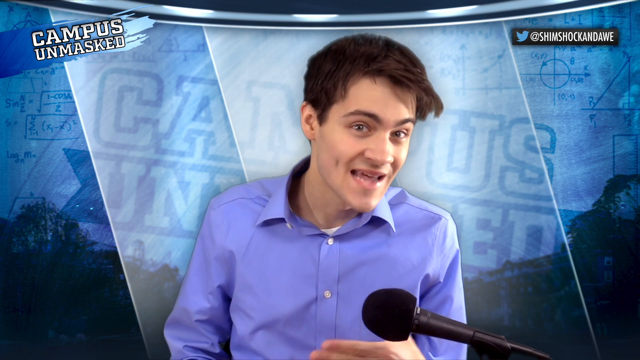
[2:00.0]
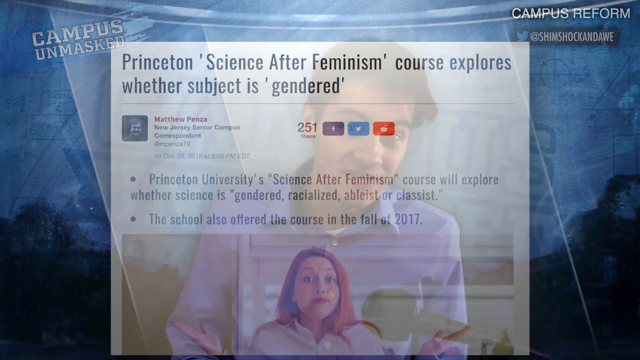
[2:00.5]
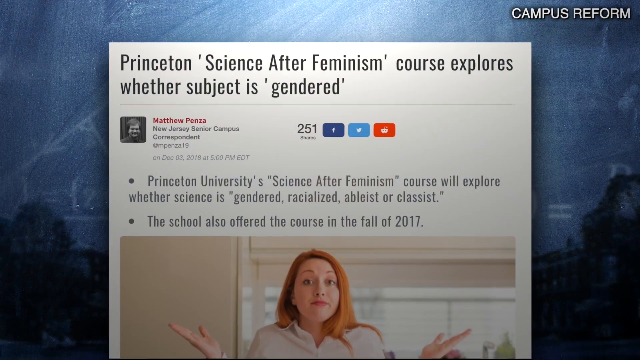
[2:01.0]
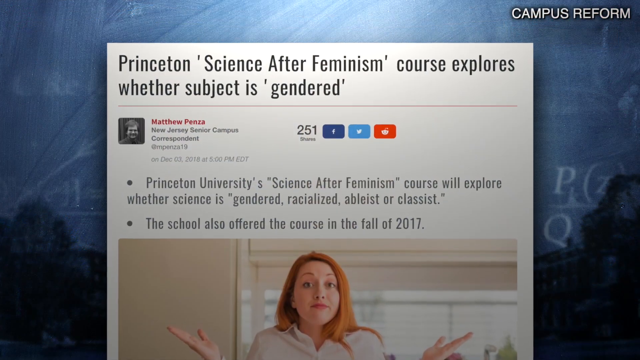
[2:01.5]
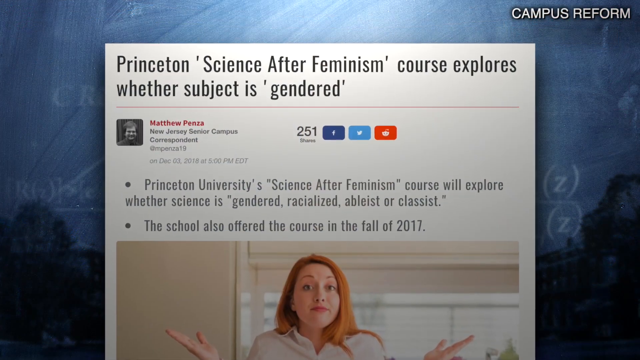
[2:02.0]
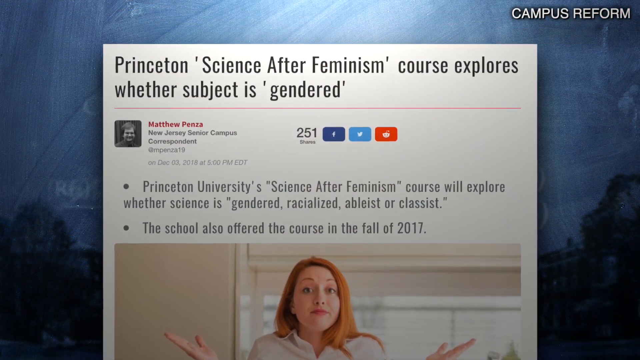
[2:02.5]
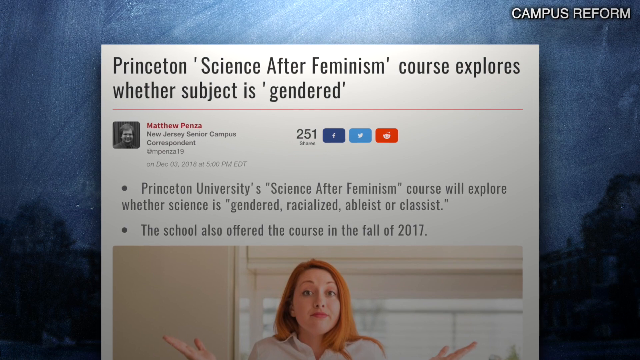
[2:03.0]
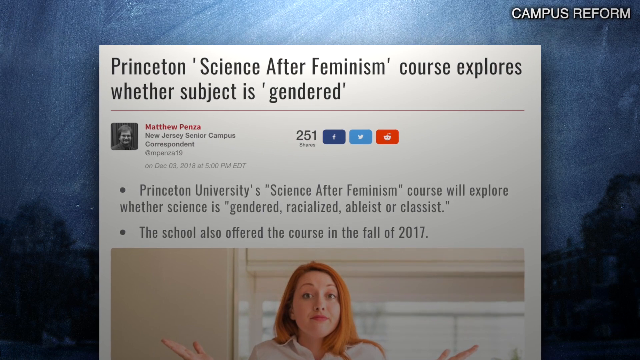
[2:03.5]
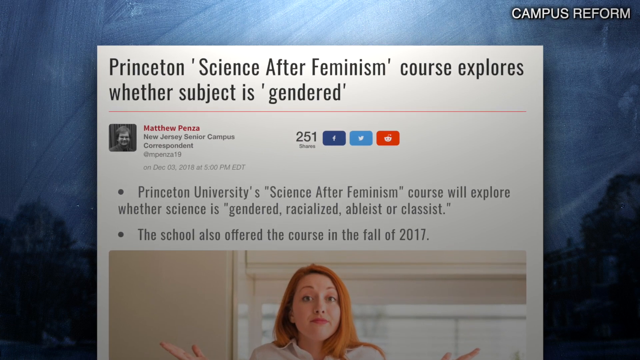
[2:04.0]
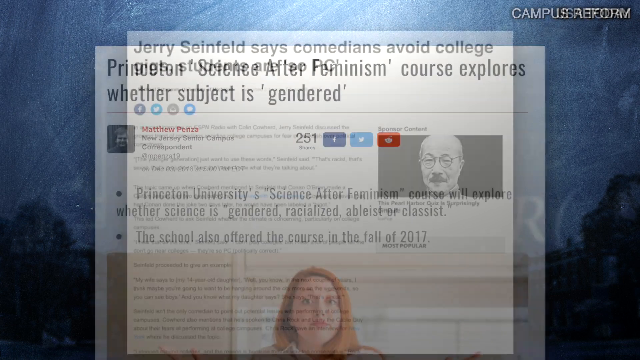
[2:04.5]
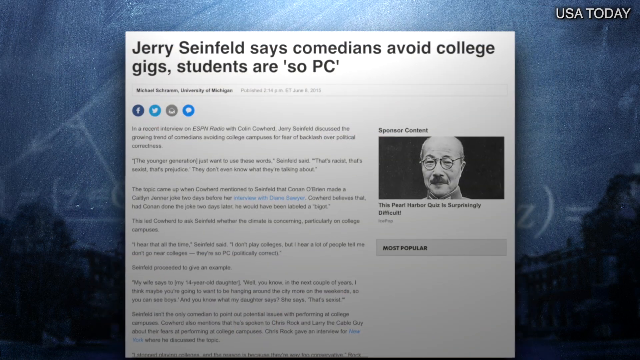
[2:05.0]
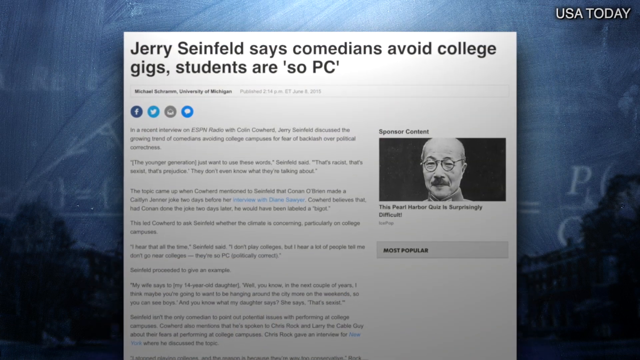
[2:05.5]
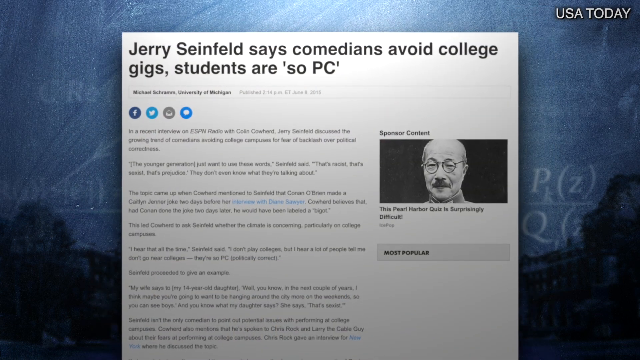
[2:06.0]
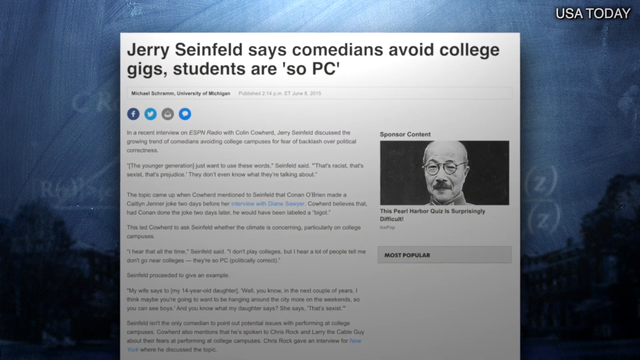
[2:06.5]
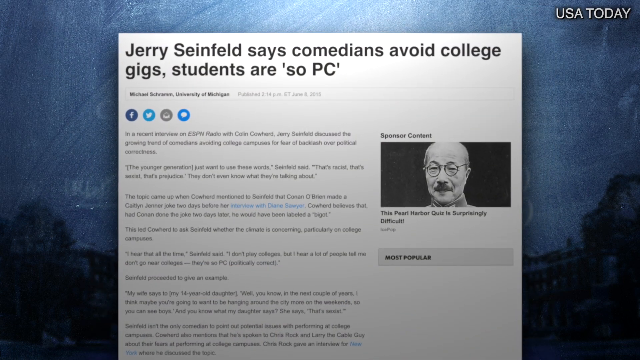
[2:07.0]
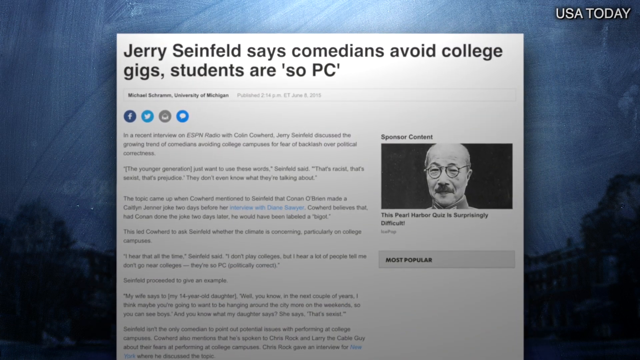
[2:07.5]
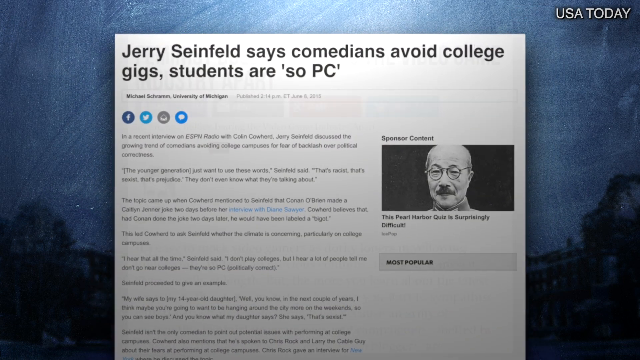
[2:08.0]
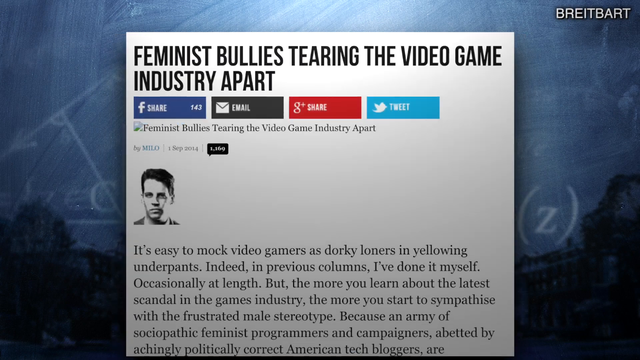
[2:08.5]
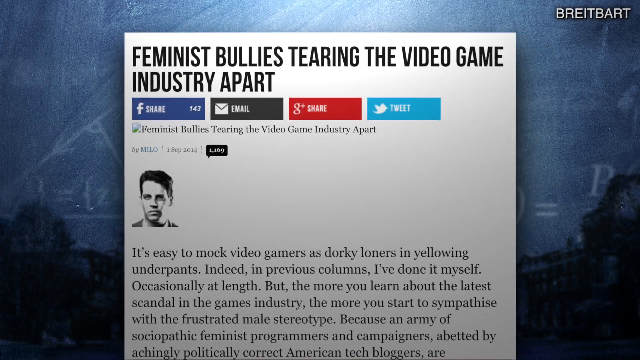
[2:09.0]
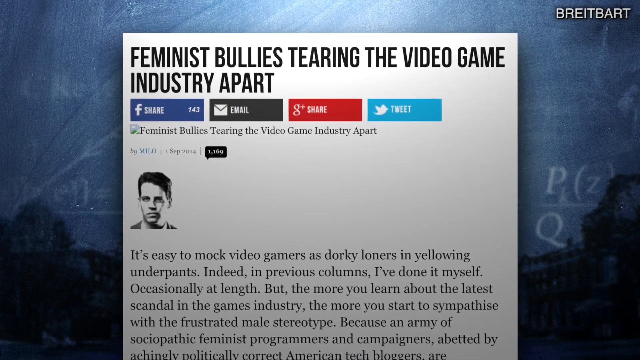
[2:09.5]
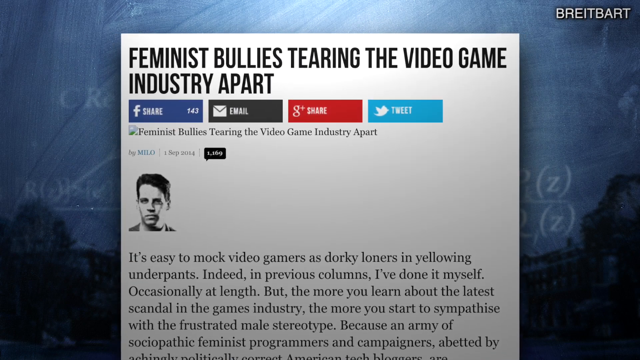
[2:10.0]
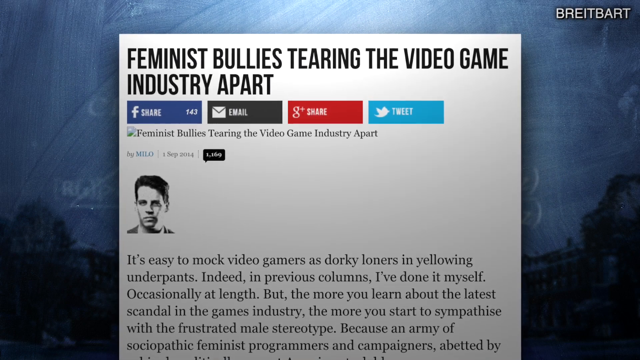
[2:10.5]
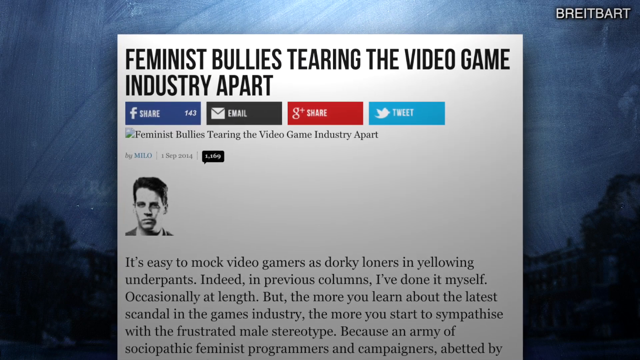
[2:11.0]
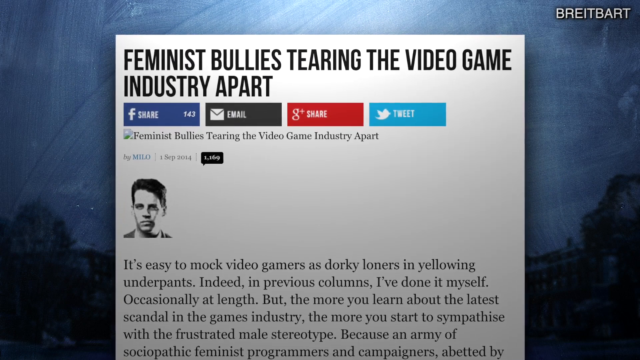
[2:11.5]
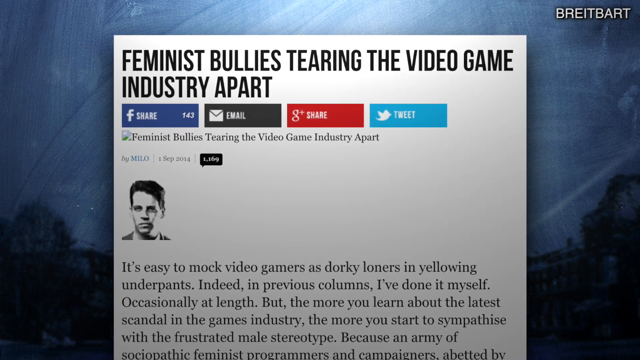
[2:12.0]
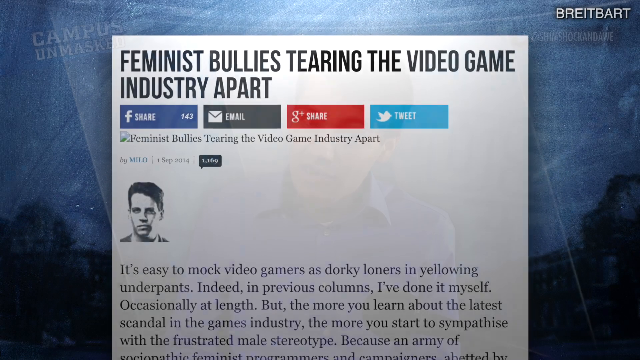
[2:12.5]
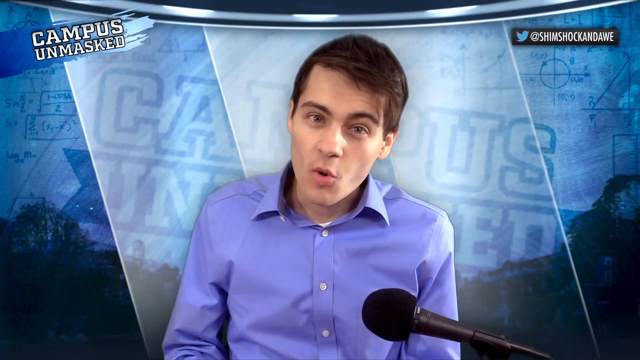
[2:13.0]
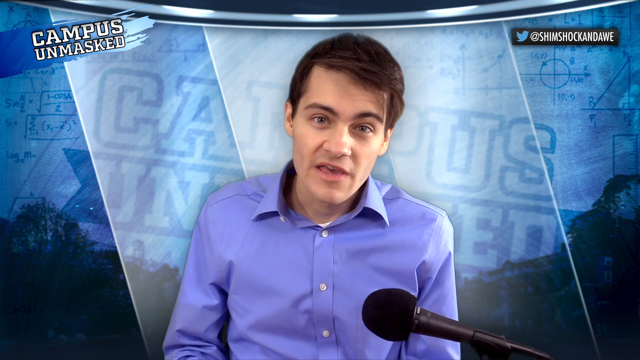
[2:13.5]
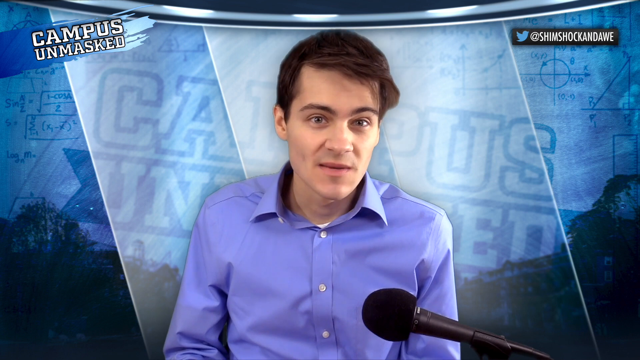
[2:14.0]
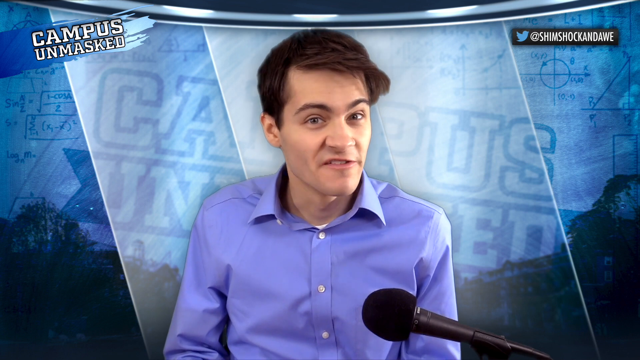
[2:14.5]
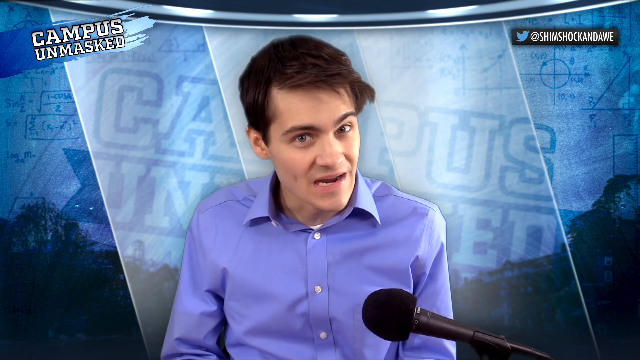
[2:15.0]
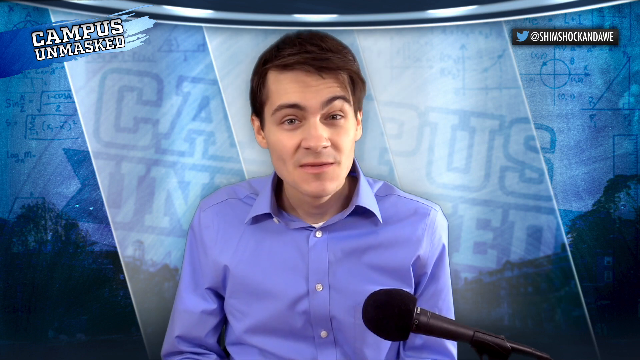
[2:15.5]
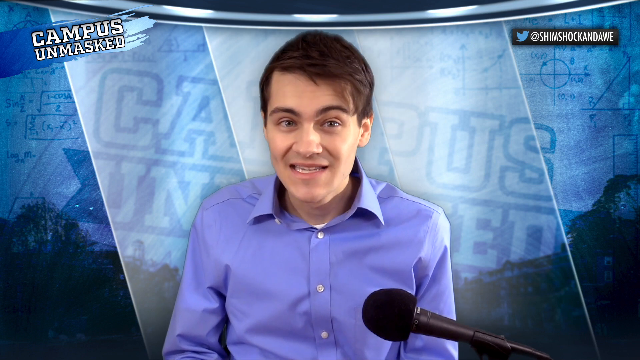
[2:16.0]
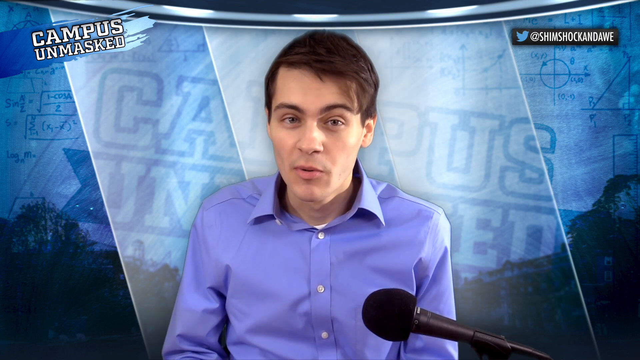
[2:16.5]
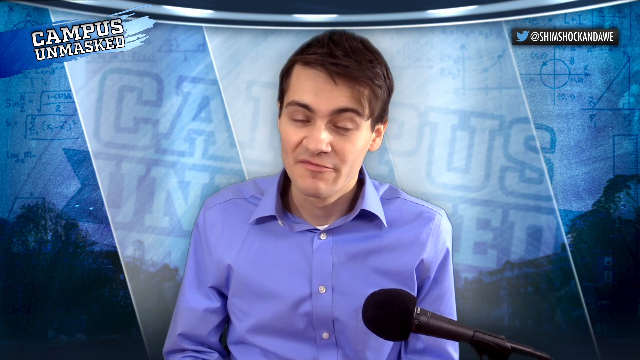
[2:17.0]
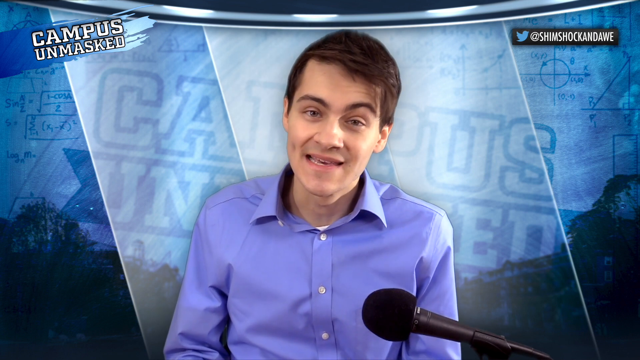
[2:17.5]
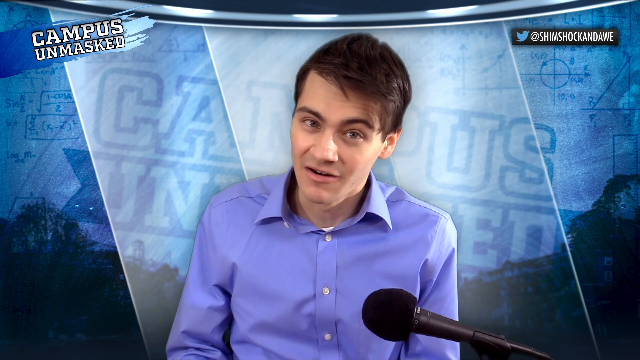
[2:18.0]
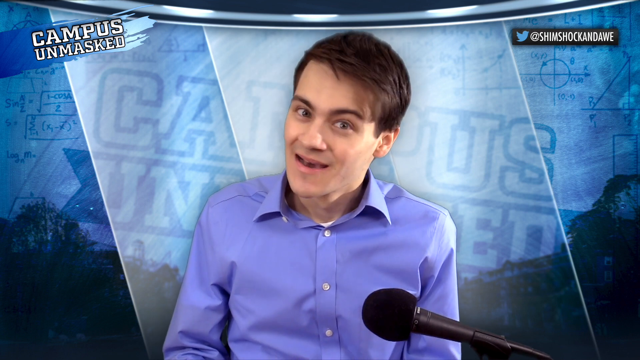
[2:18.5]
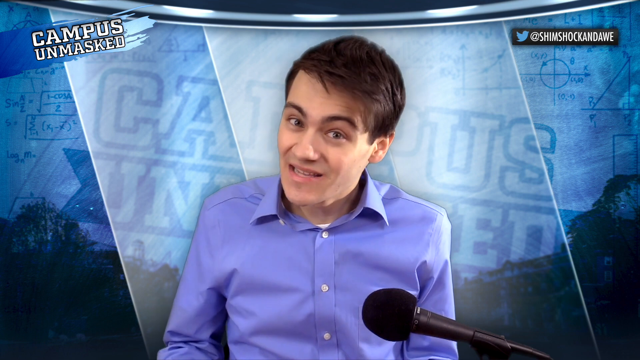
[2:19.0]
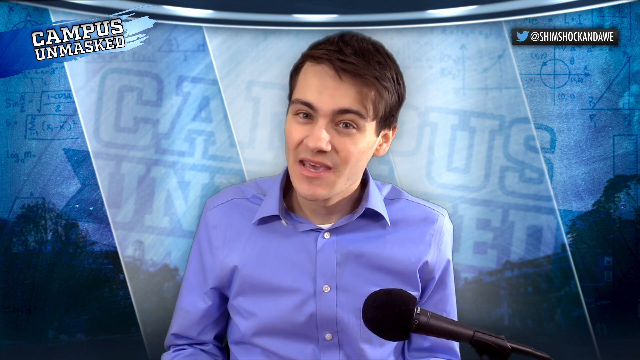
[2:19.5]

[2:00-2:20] Rob Shimshock shows an article titled "Princeton's Science After Feminism Course Explores Whether Subject is Gendered." It says "Princeton's University's Science After Feminism Course will explore whether it is gendered, racialized, ableist, or classist. The school also offered the course in the fall of 2017," and it was written by Matthew Penza. Next comes "Jerry Seinfeld says comedians avoid college gigs, students are so PC."